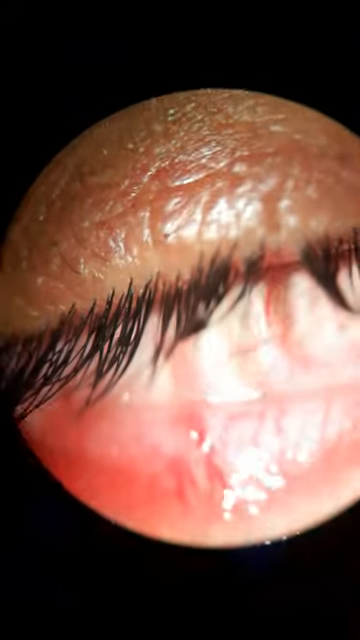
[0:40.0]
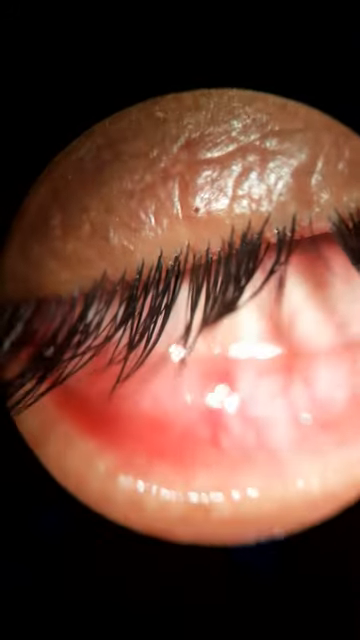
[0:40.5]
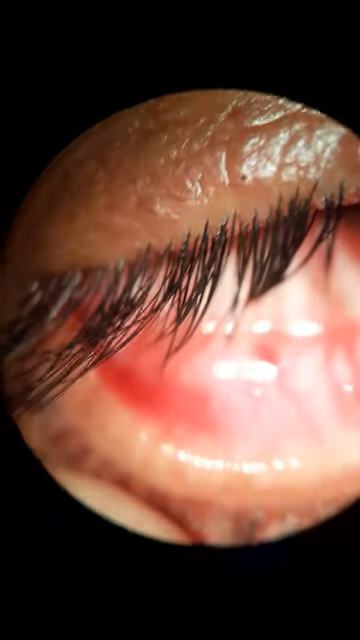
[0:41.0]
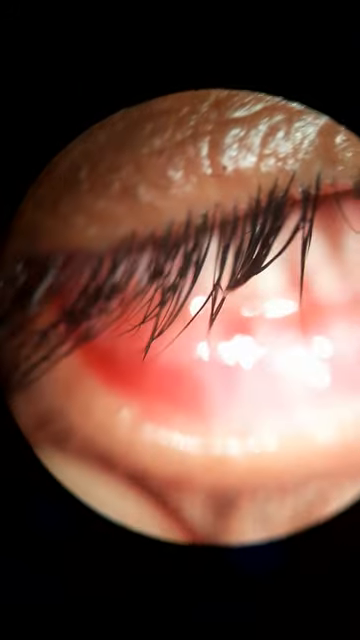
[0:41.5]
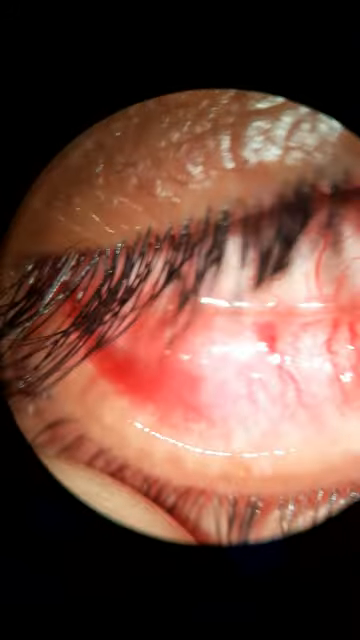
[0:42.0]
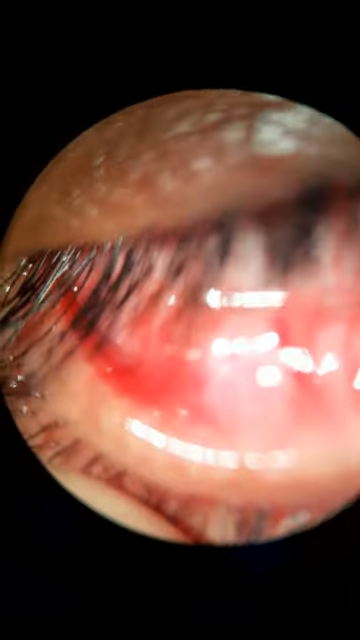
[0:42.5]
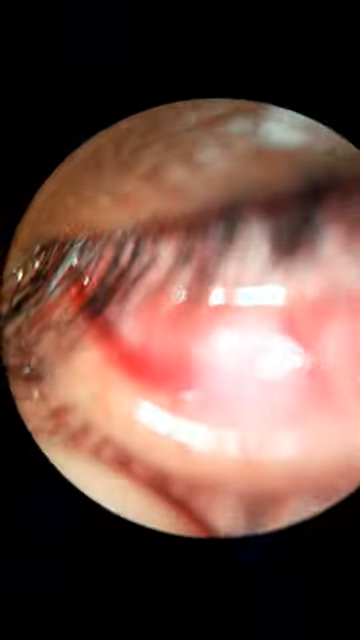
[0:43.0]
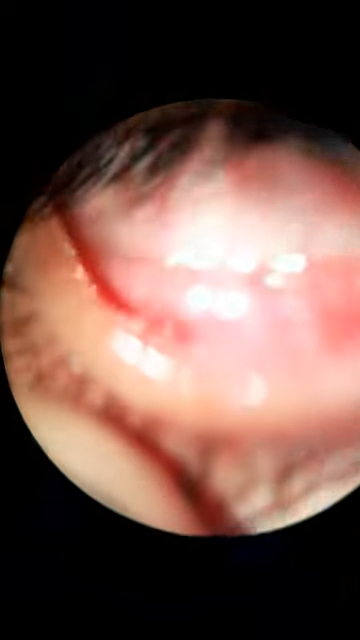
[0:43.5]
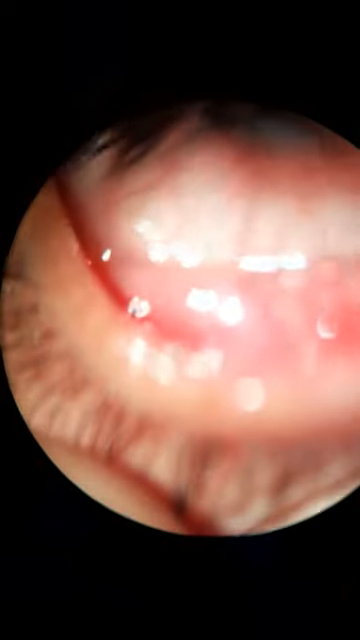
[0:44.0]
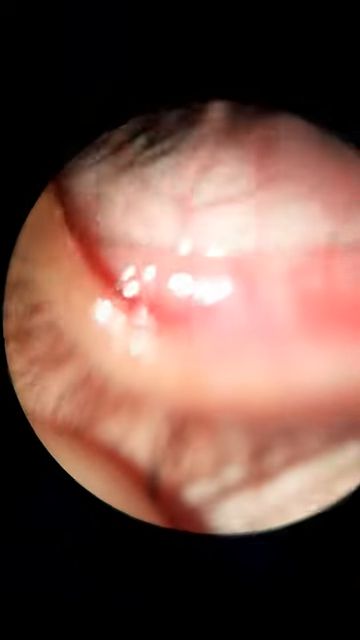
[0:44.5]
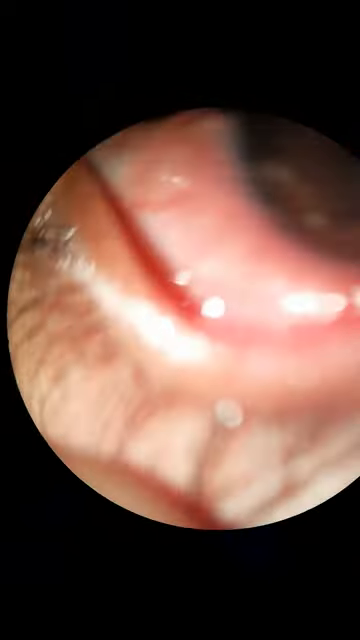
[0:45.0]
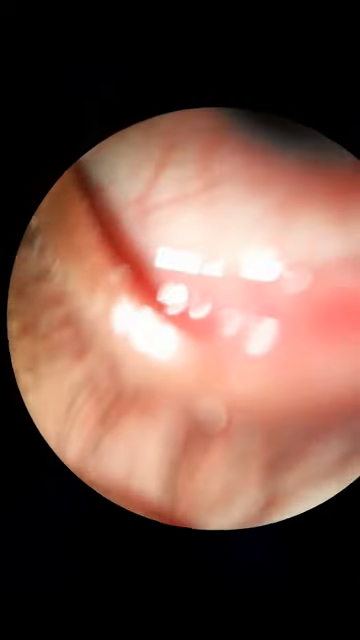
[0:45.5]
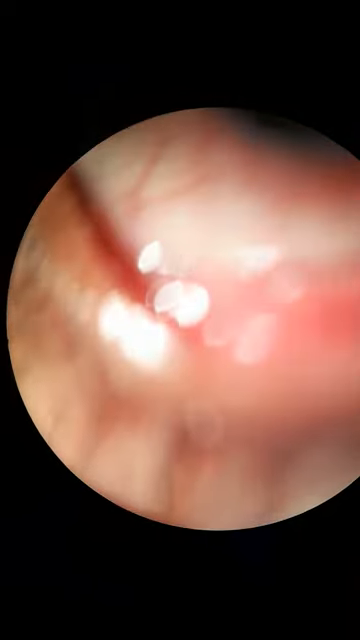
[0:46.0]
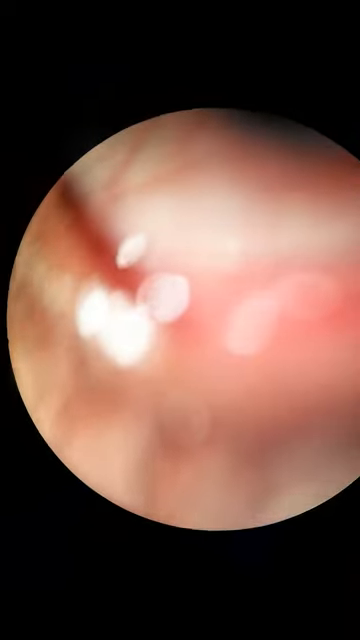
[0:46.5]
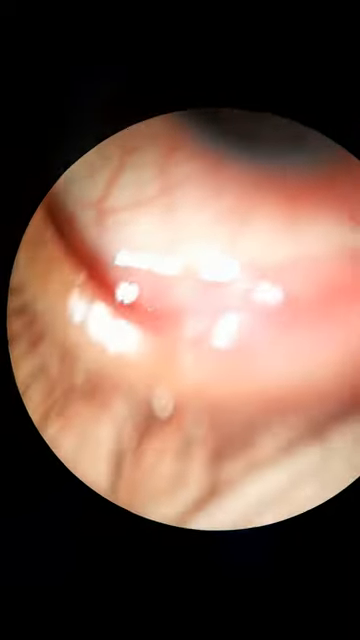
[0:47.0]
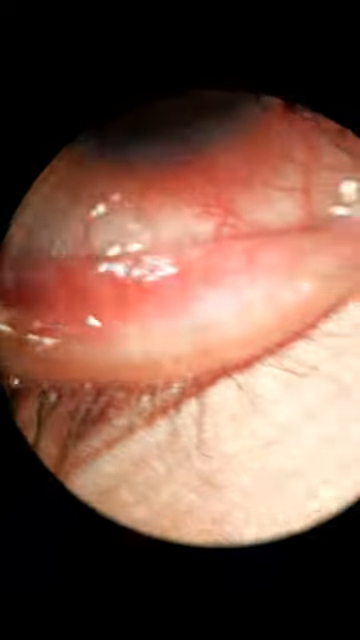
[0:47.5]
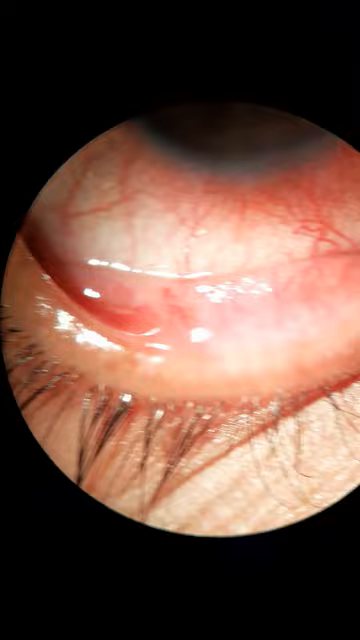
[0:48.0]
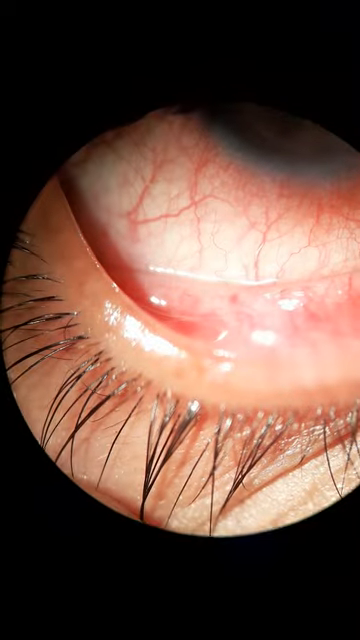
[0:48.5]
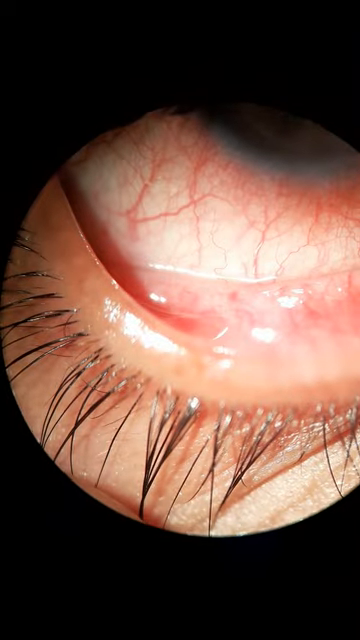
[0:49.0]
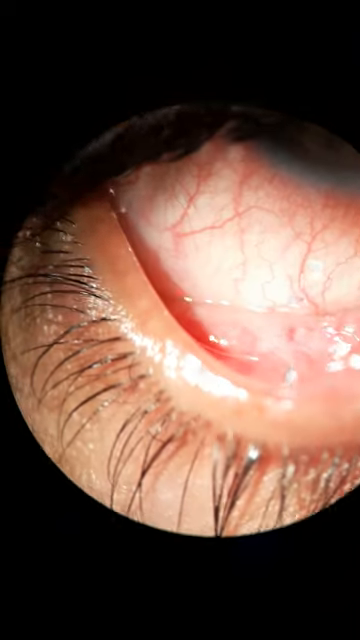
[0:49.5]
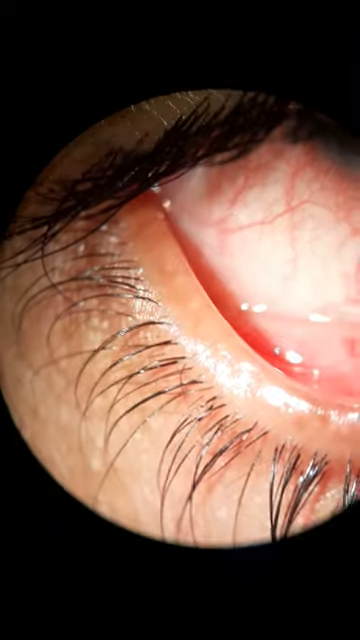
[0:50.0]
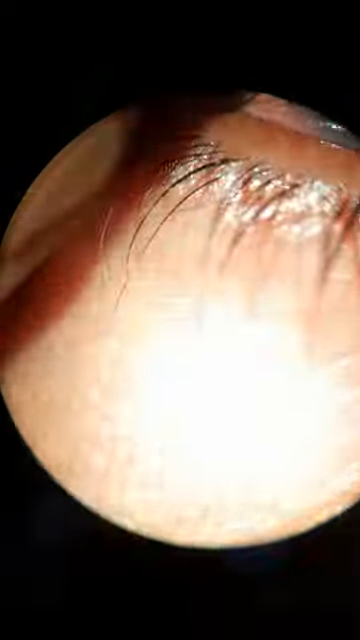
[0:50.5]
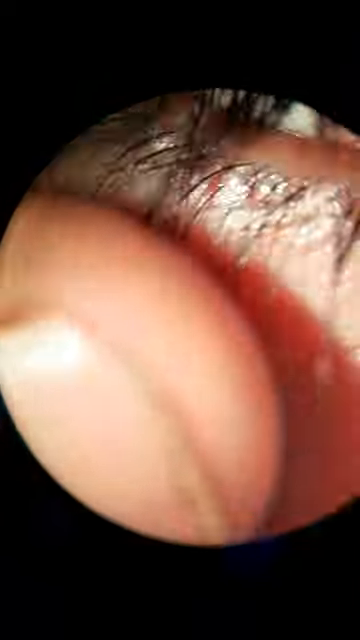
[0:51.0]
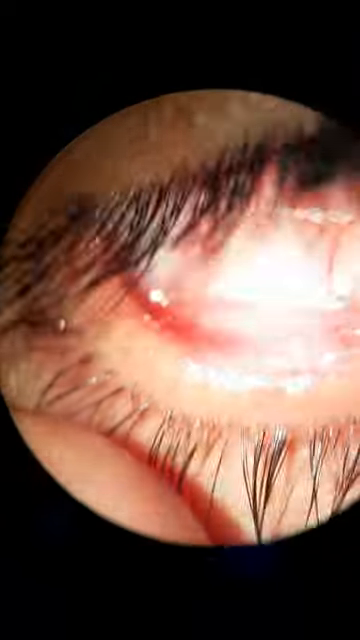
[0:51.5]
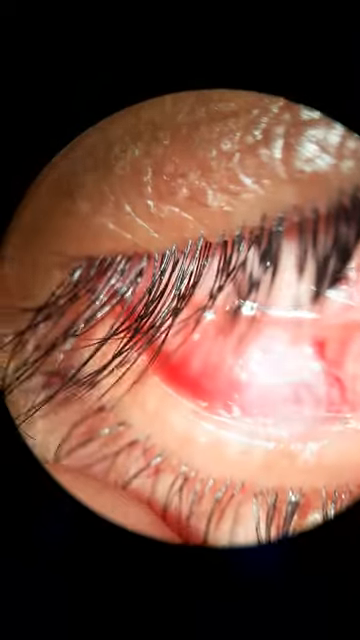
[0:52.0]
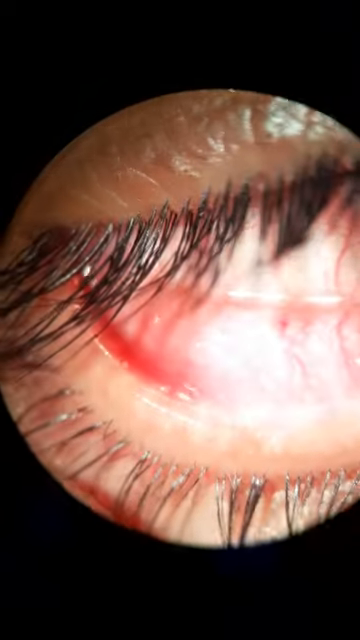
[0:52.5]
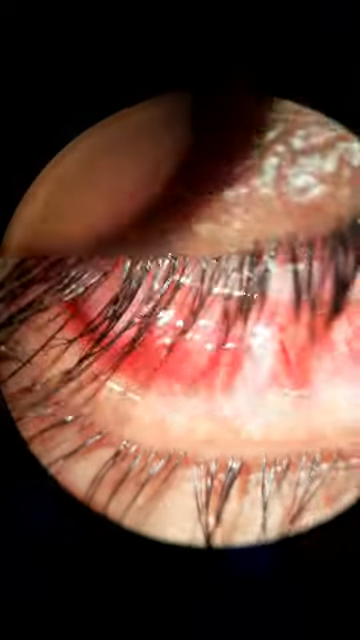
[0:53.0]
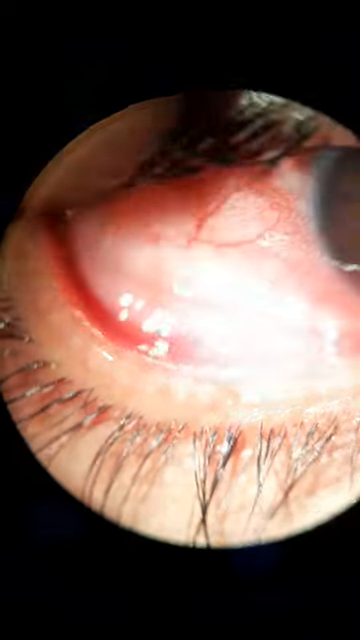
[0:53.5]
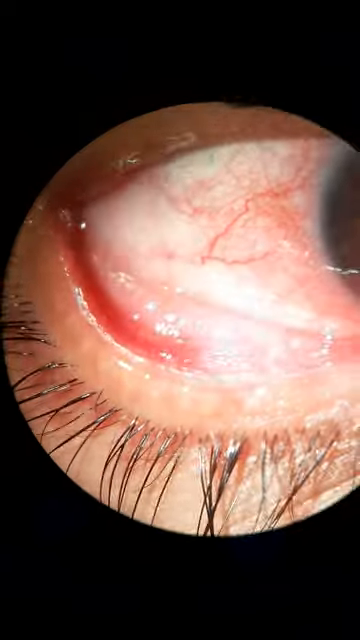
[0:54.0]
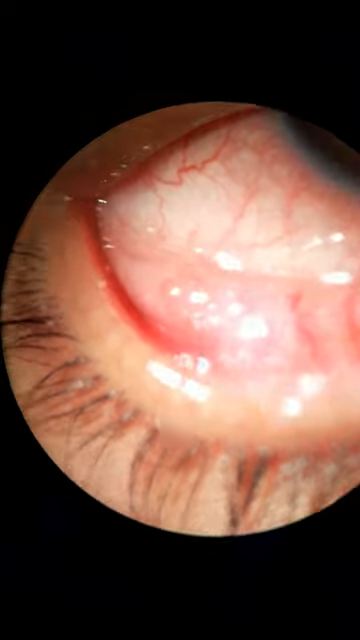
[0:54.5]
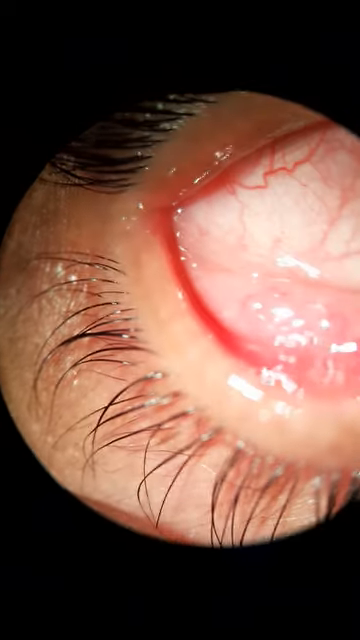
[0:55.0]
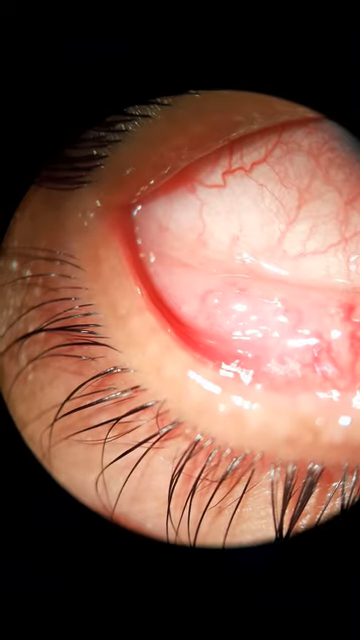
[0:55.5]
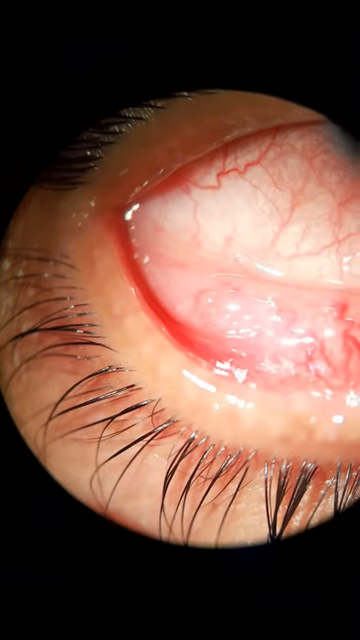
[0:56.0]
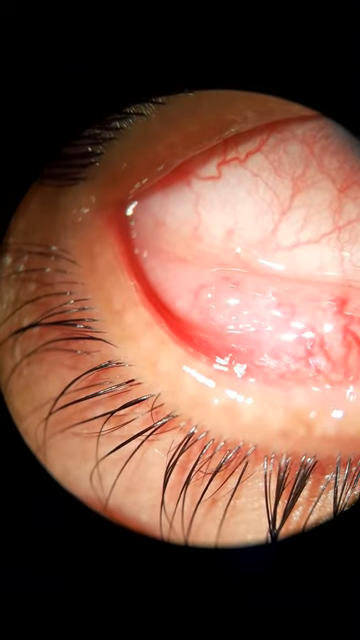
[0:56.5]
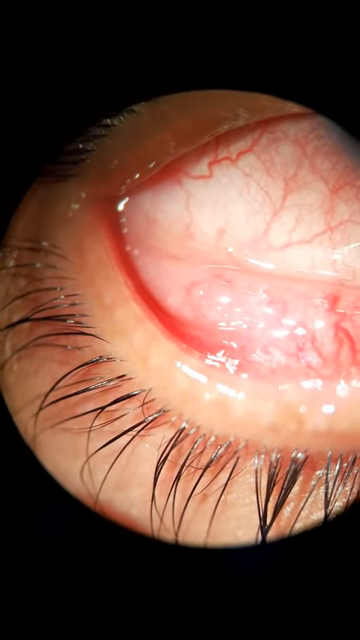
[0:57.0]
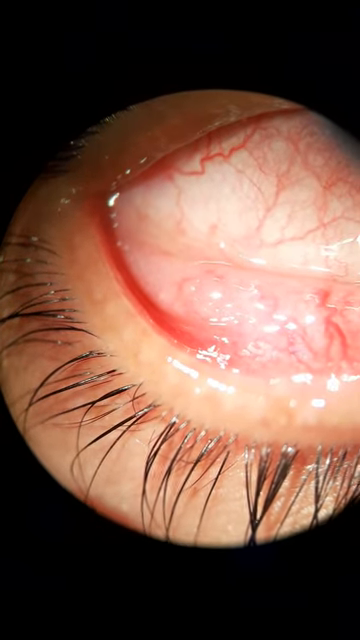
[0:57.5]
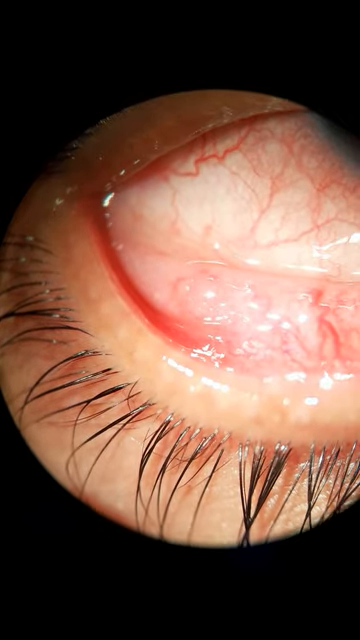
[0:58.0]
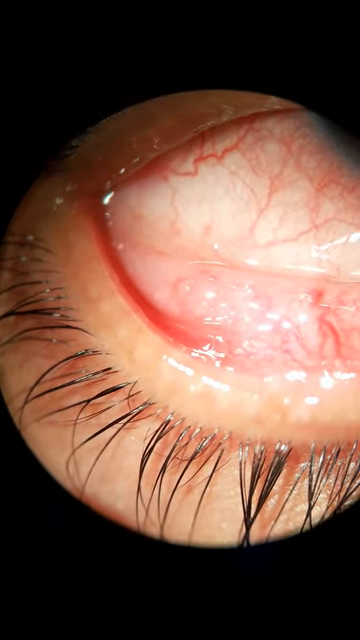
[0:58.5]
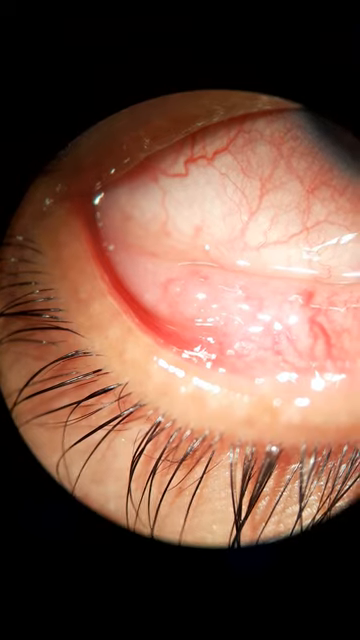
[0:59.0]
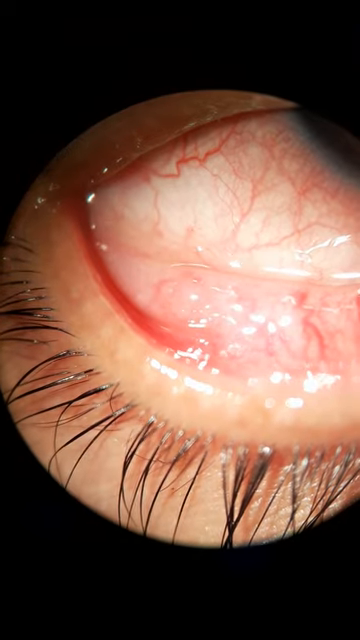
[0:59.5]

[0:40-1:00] The very close-up shot of a human eyeball continues. The person's dark eyelashes are visible, but the camera seems to fixate on the eyeball itself. A finger appears to be pulling on the lower side and the upper side of the eye to expose different parts of the eyeball. The person appears to have a lot of redness in the eye. It is difficult to tell what the person is being checked for. The person appears to look around the room as the doctor pulls down and pulls up on the eye. The rest of the background is blacked out, keeping the eyeball the focus. For several seconds the person looks around and the eyelids are touched.